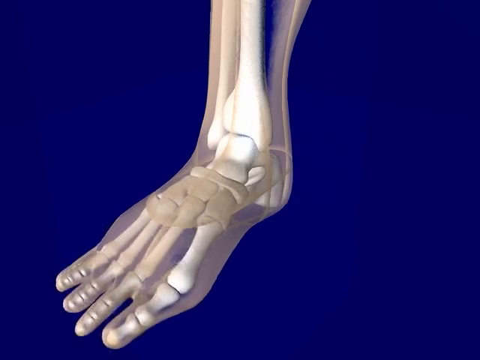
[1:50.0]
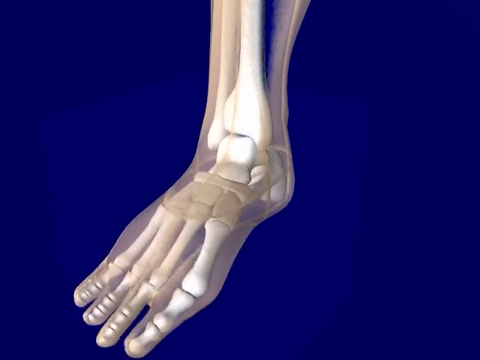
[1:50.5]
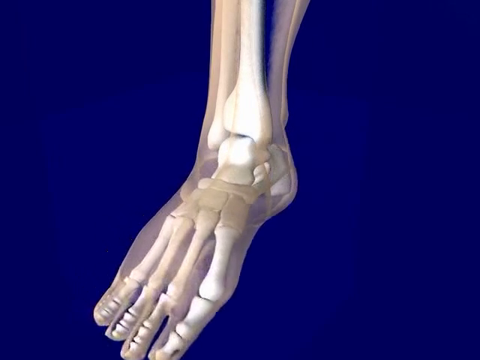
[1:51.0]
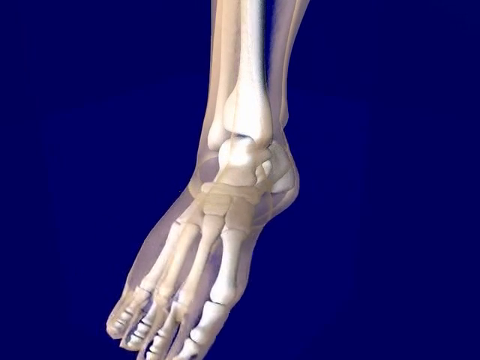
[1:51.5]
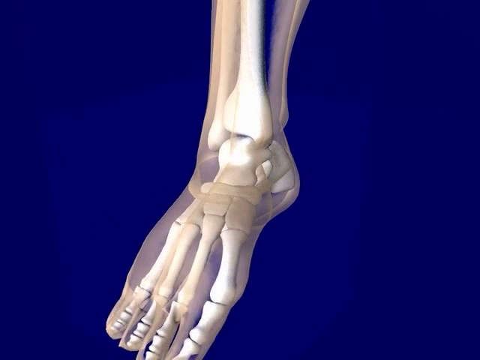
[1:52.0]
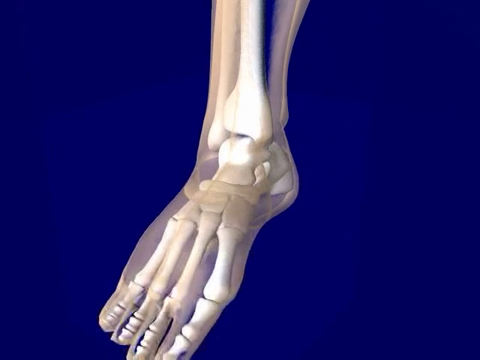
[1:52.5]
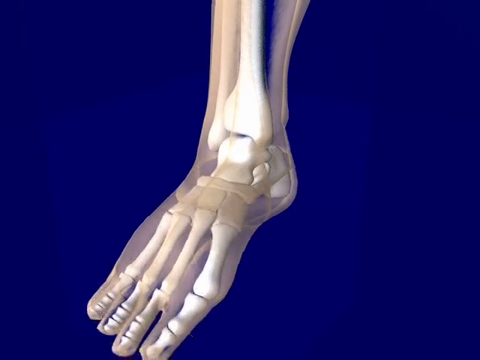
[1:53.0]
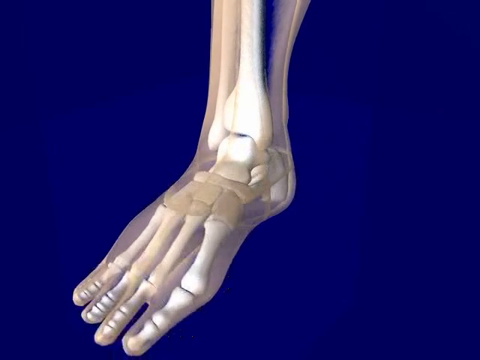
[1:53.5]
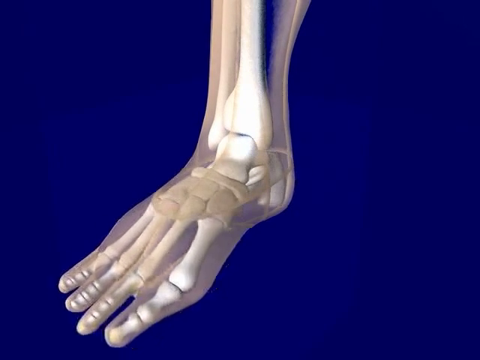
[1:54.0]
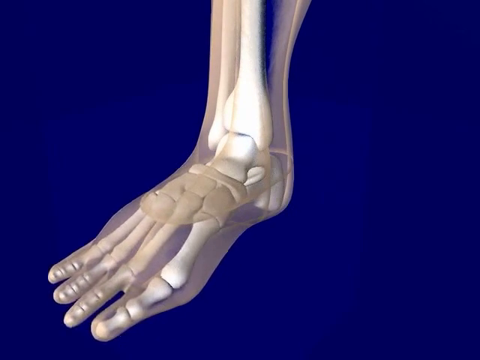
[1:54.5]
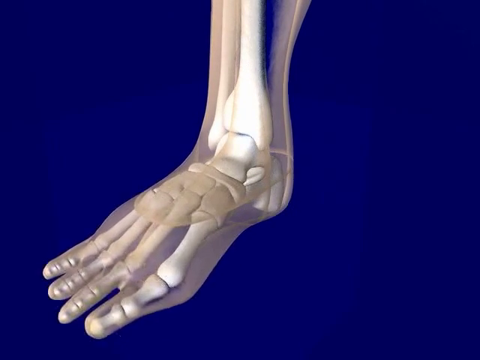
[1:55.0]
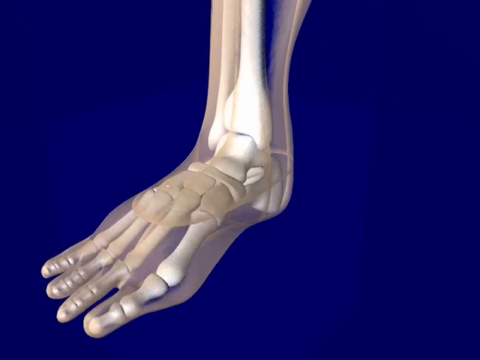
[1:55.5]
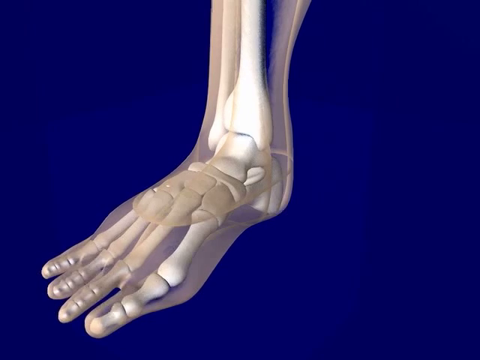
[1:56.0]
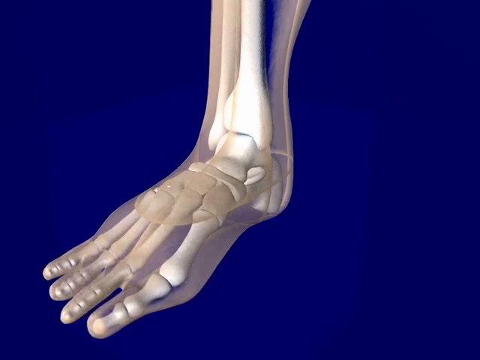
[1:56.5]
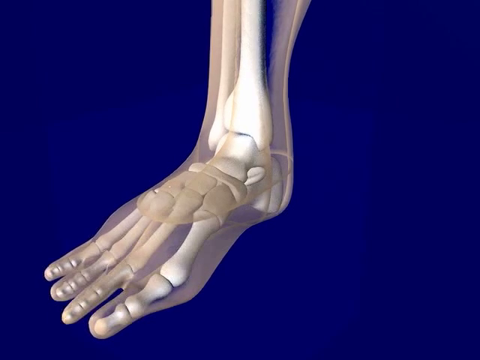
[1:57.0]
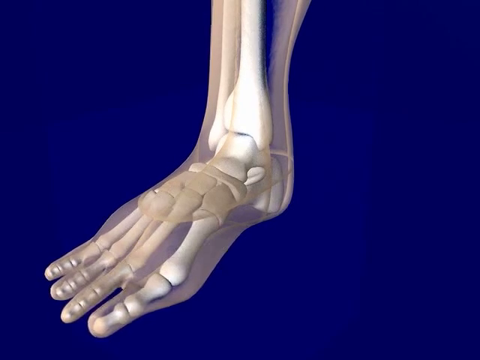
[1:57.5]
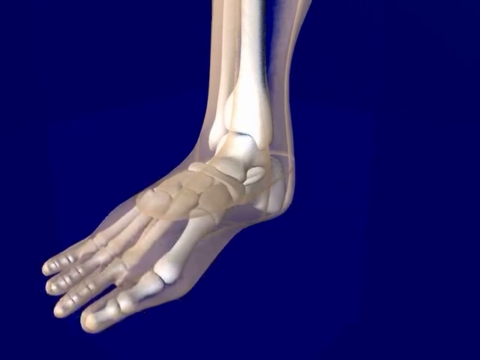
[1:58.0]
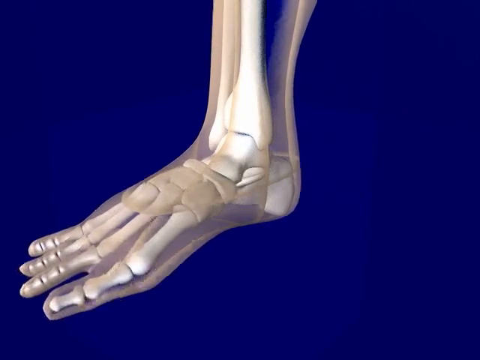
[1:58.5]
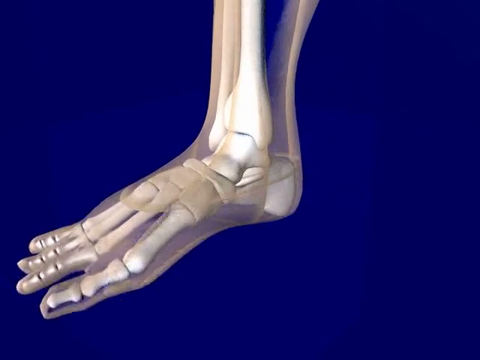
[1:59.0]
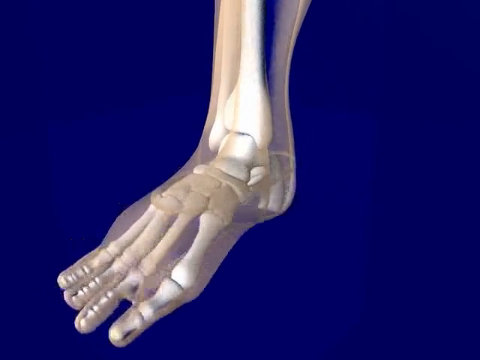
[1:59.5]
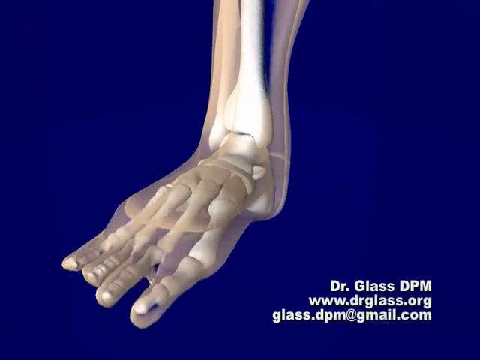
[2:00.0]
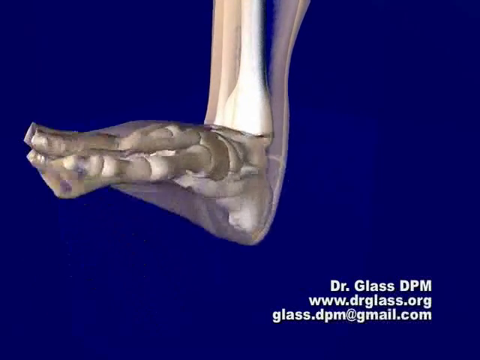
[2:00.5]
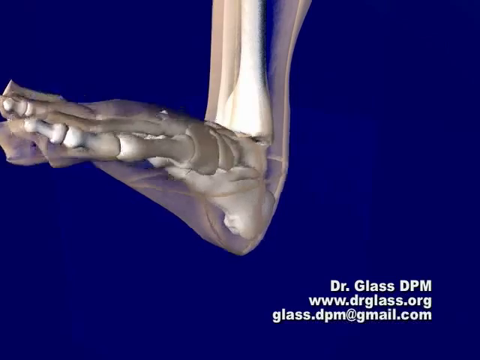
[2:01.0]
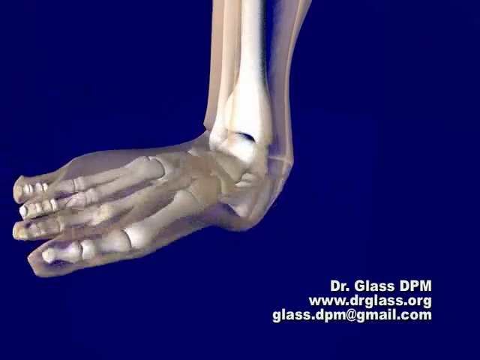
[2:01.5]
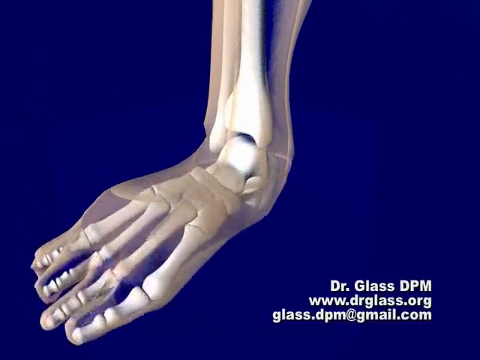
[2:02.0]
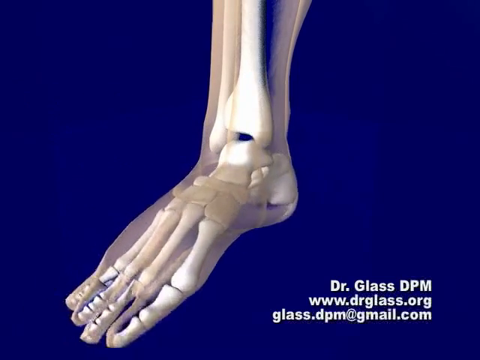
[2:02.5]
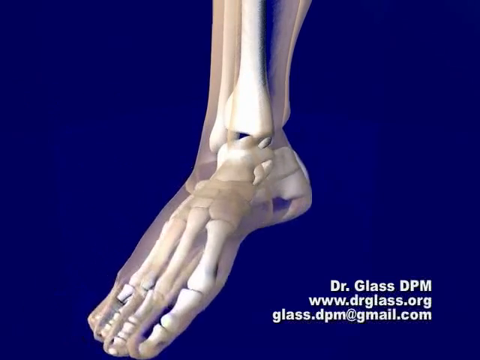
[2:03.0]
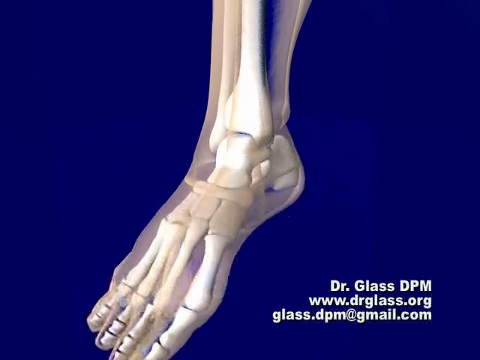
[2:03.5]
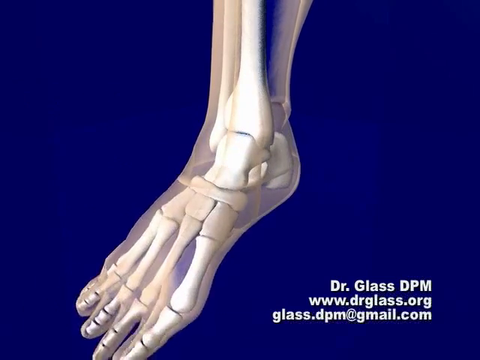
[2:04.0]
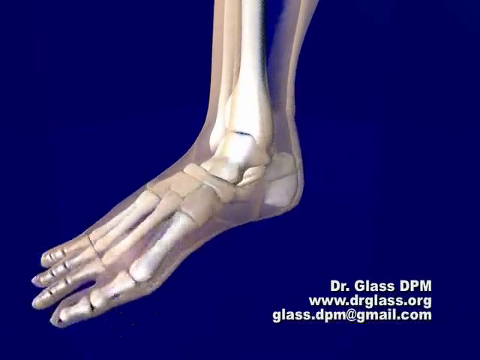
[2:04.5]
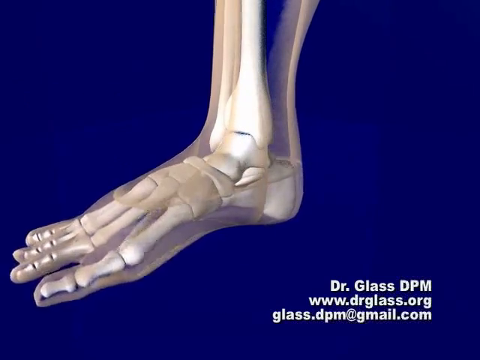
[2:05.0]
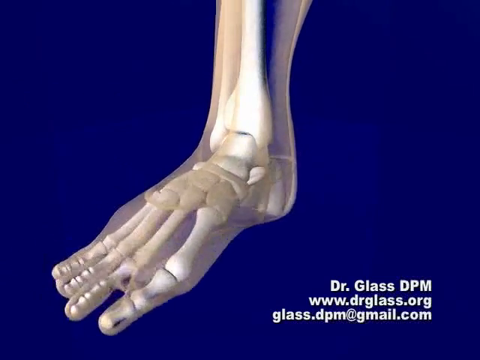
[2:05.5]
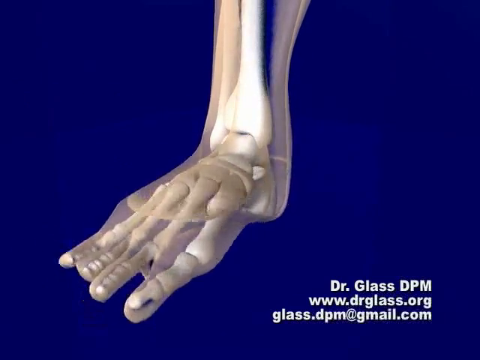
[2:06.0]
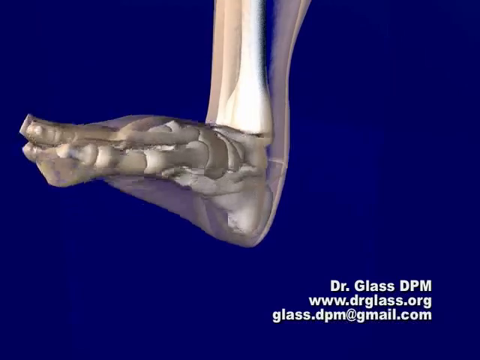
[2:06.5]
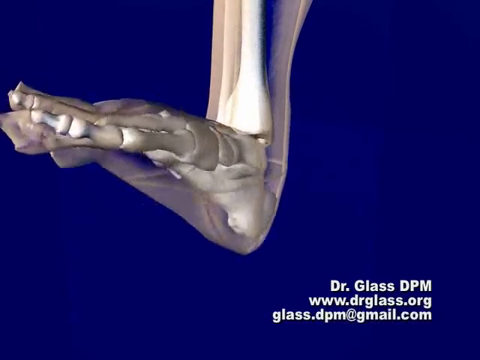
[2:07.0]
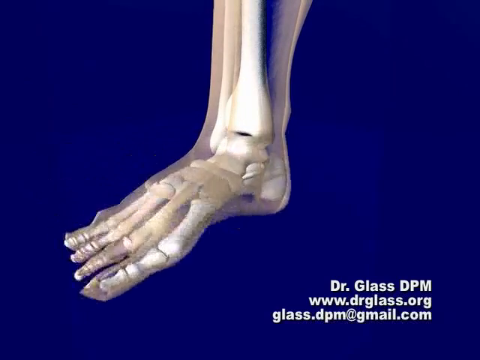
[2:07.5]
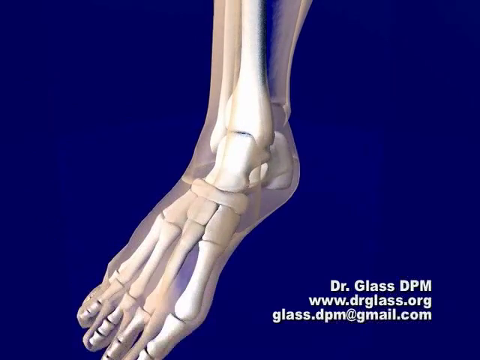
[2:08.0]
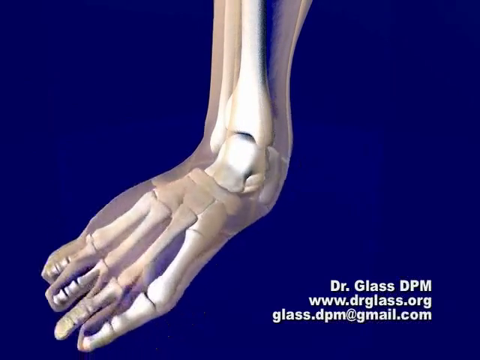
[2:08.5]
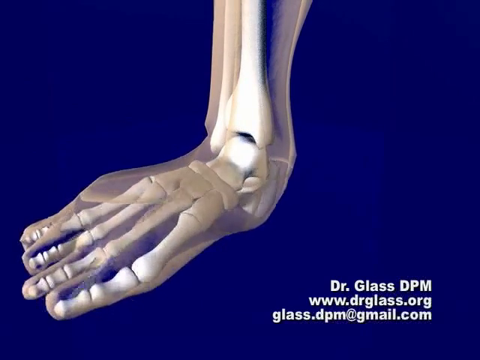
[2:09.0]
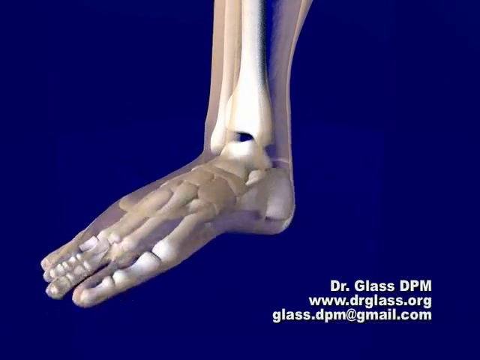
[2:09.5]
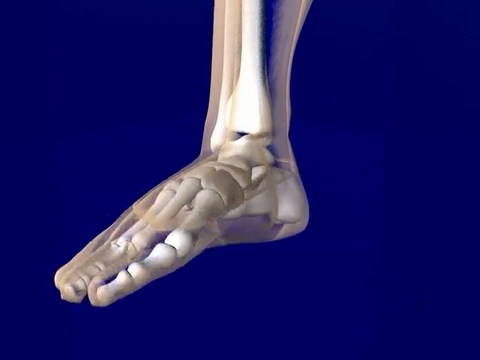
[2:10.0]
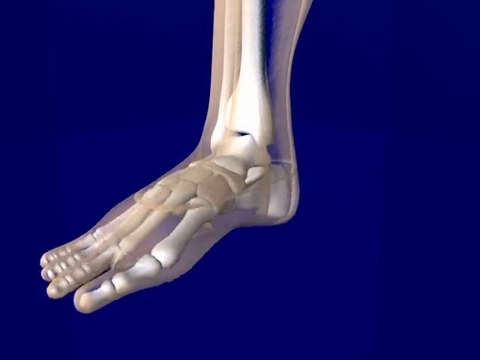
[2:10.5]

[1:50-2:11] An animated x-ray view of the foot and ankle shows only the bones. The ankle moves in different directions: side to side, up and down, and in circles, showing how it interacts with the ankle bone and the lower part of the leg. Credits read Dr. Glass, DPM, with the website www.drglass.org and an email address. The movements of the foot are reviewed again, highlighting adduction and abduction. The back of the ankle is seen, then the foot turns so that only the front of the foot is visible once again. Inversion is shown with the foot going counterclockwise, and eversion with the foot going clockwise. With the toes divided, both angles of the first two toes and the last three toes are shown. The foot goes up and down, demonstrating dorsiflexion and plantar flexion.